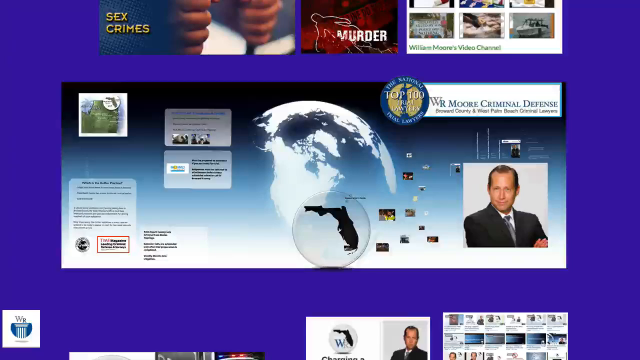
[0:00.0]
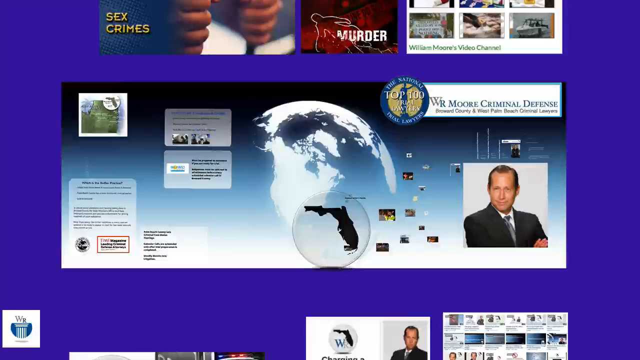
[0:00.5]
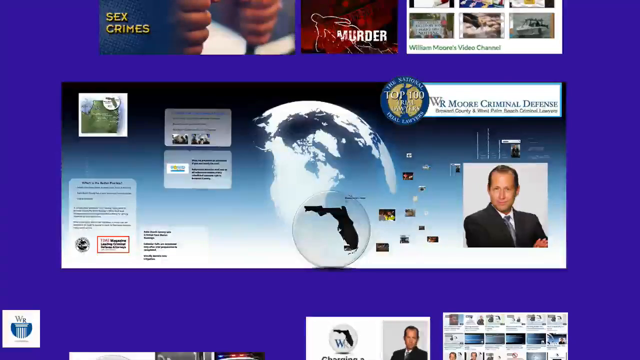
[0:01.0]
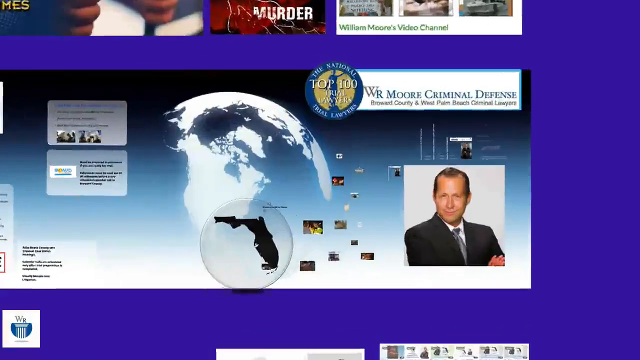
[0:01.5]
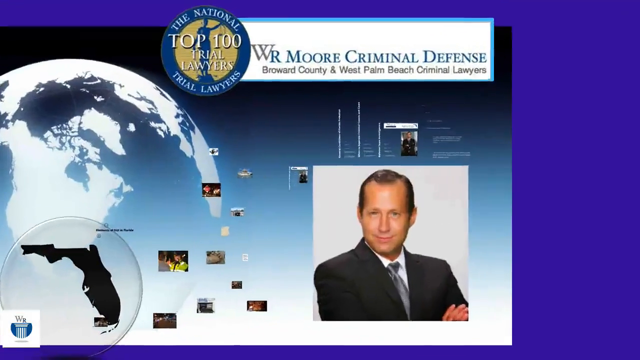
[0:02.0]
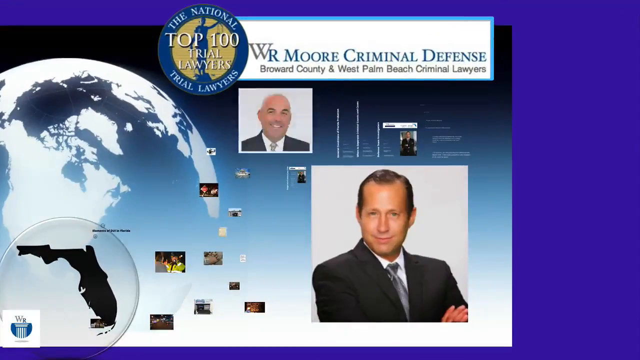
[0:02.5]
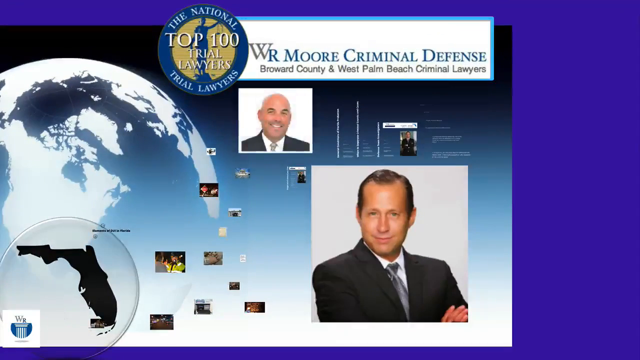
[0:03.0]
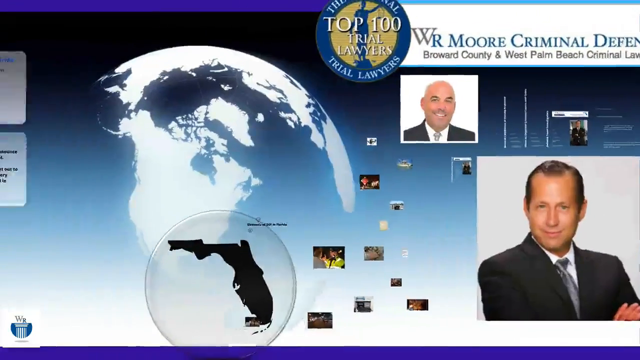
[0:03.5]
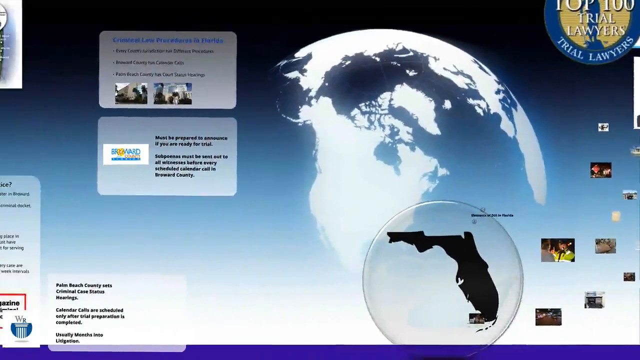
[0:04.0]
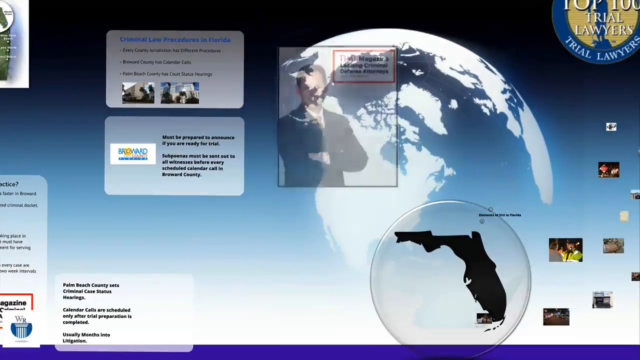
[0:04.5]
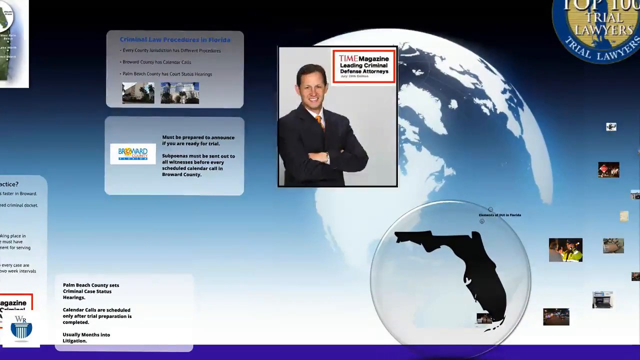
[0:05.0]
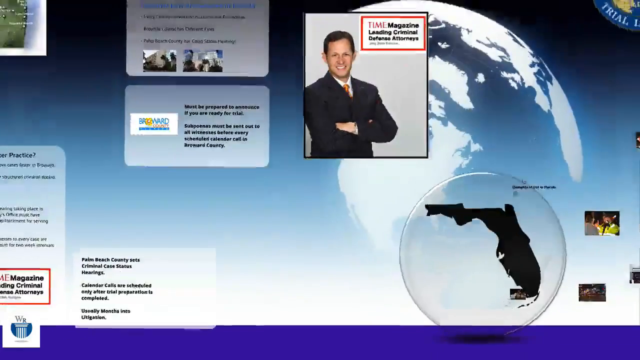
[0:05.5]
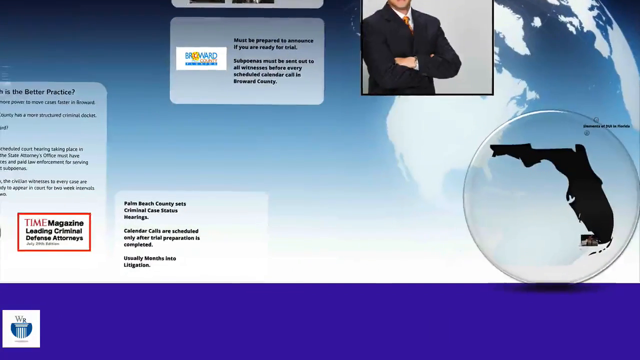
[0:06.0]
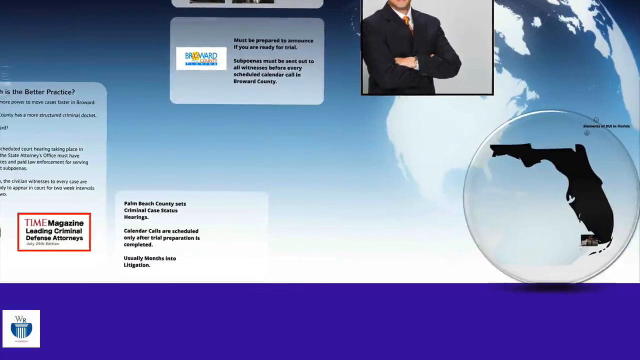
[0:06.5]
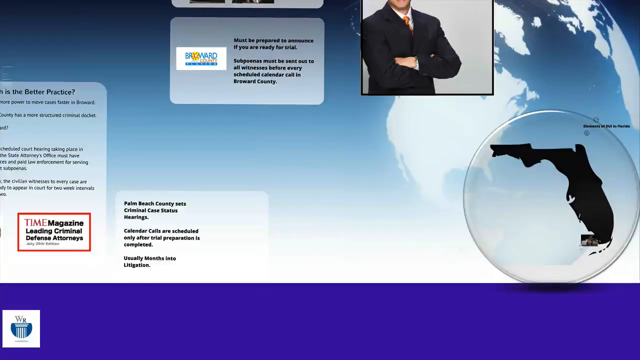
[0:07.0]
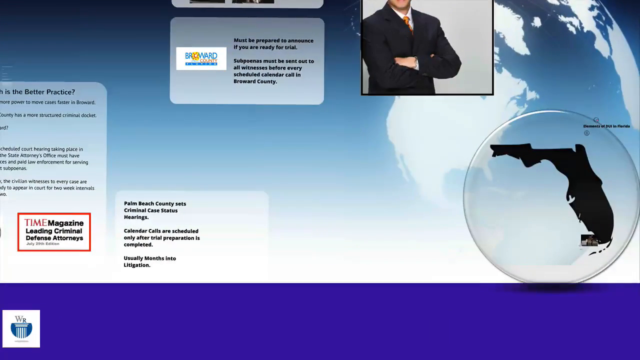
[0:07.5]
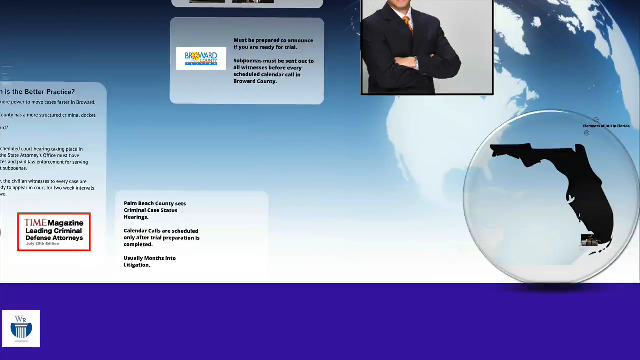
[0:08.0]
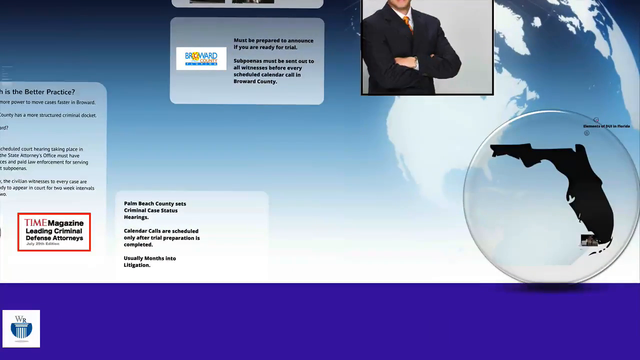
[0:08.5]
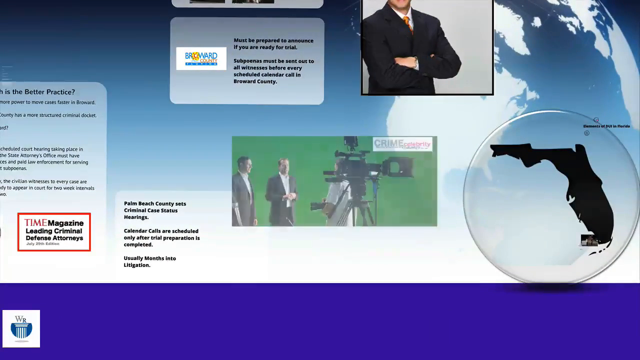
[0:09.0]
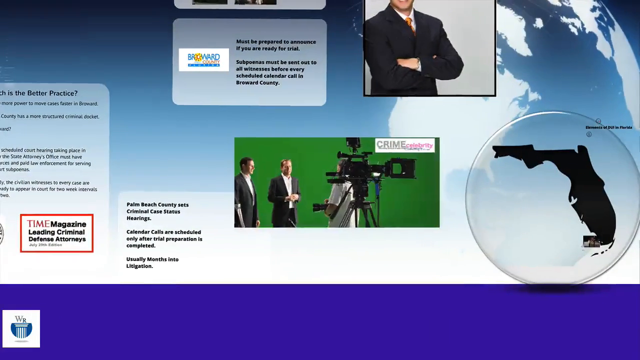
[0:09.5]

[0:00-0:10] The video opens with a blue background at the top and someone holding their hands on a jail cell. In the middle, text reads "sex crimes murder," along with a reference to Moore criminal defense. It looks like a commercial for an attorney. The attorney is in the middle of the frame on the right-hand side, wearing a black suit with a black and white tie, his hands folded. The world also appears: there is a globe, along with various articles, including a Time magazine article, apparently about the law firm and the lawyers who work there. A brief snippet shows another gentleman with white hair in a black suit, and a third, somewhat younger gentleman appears on the cover of Time magazine.